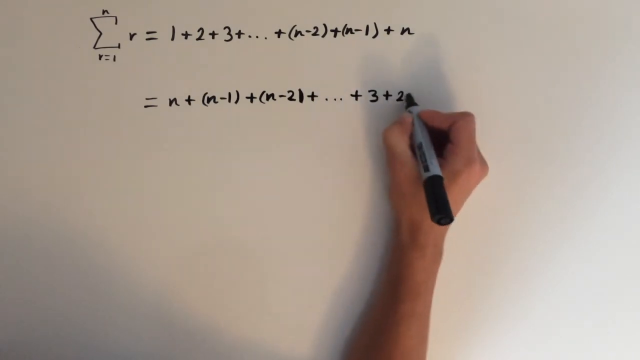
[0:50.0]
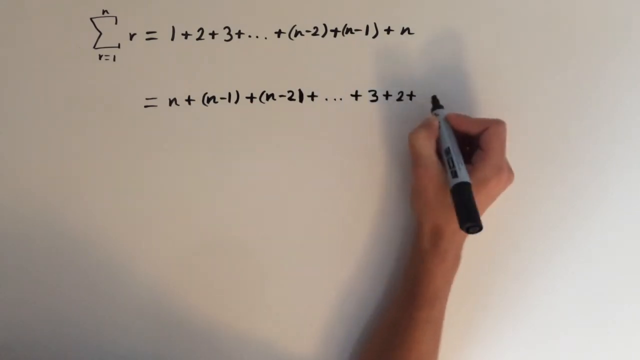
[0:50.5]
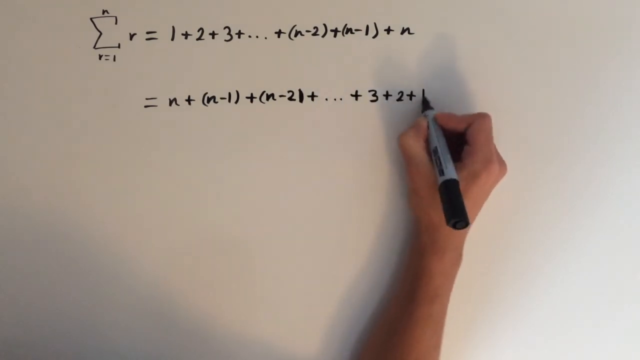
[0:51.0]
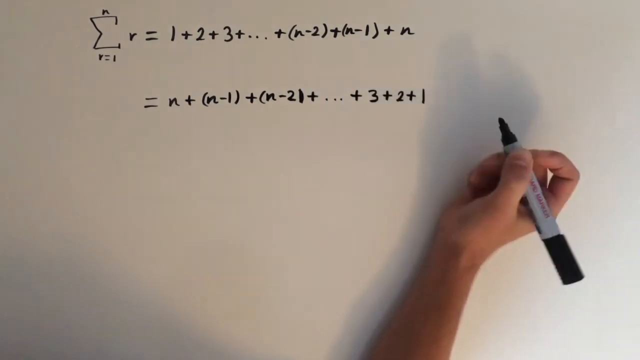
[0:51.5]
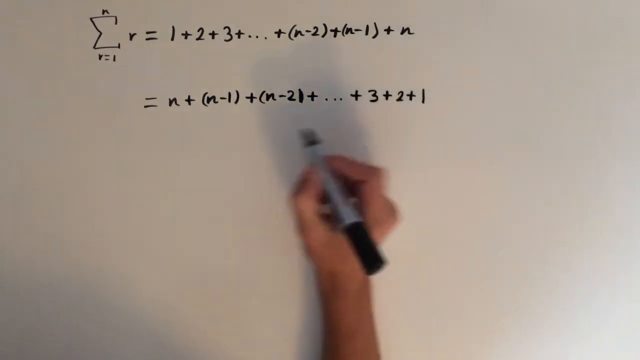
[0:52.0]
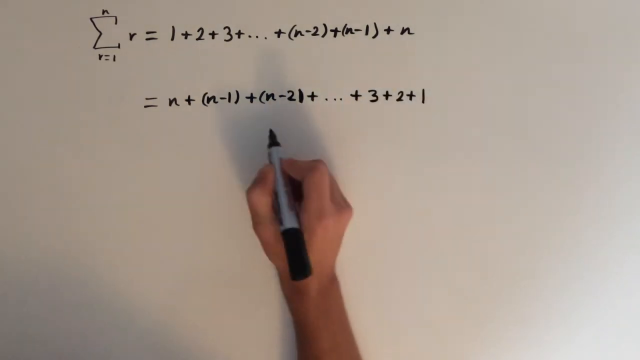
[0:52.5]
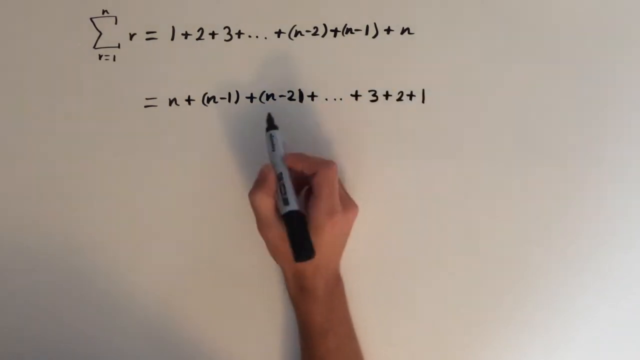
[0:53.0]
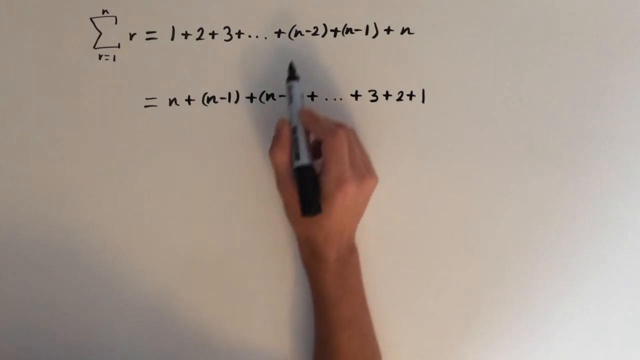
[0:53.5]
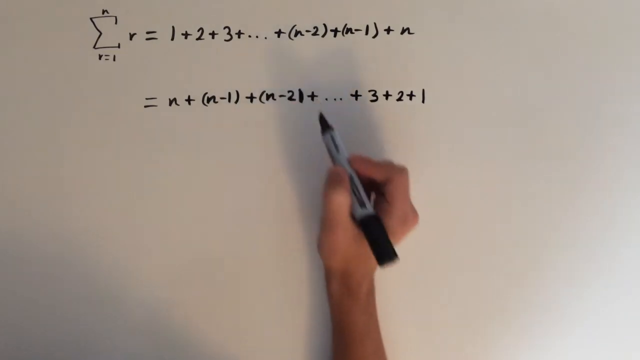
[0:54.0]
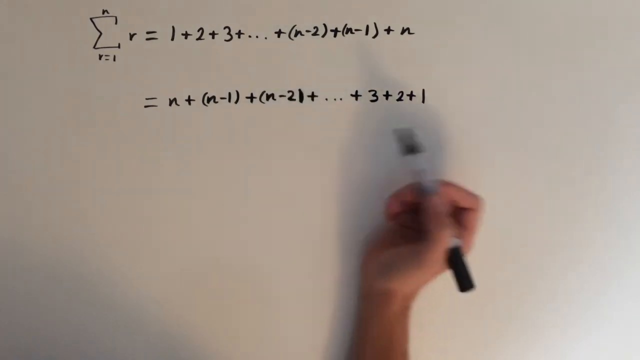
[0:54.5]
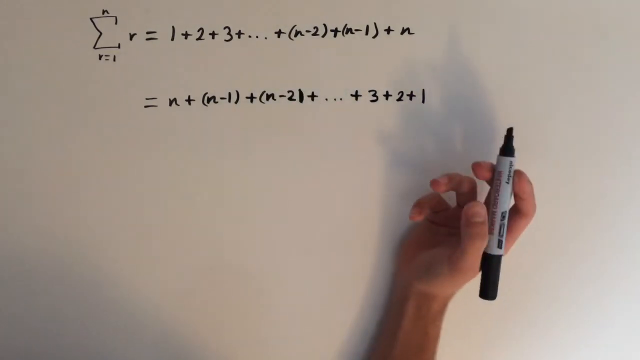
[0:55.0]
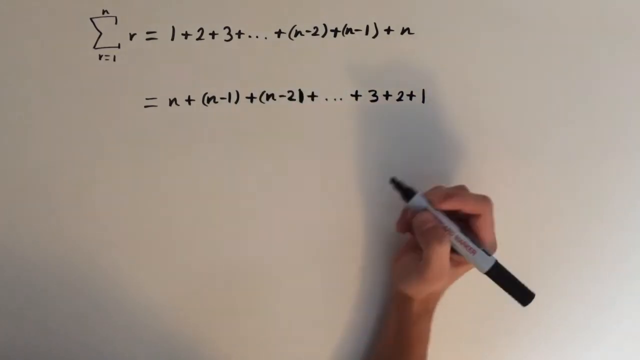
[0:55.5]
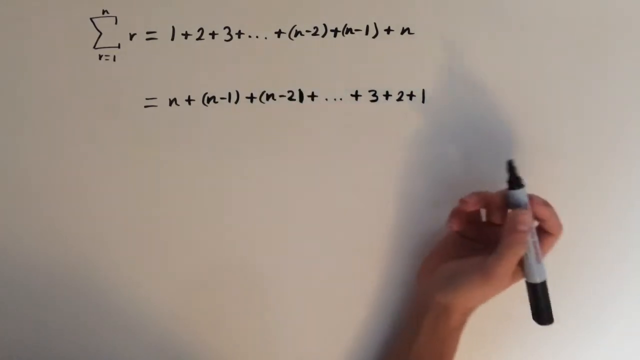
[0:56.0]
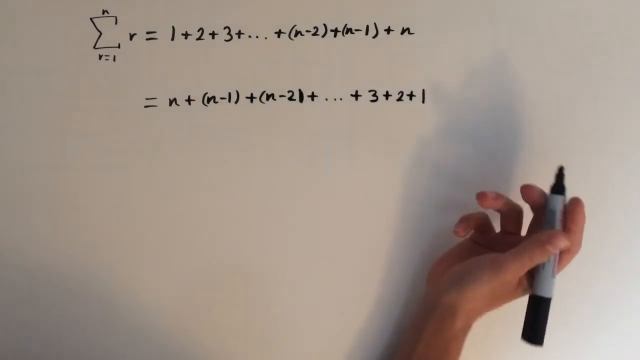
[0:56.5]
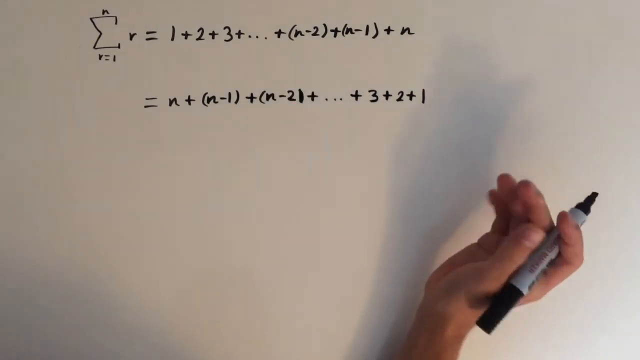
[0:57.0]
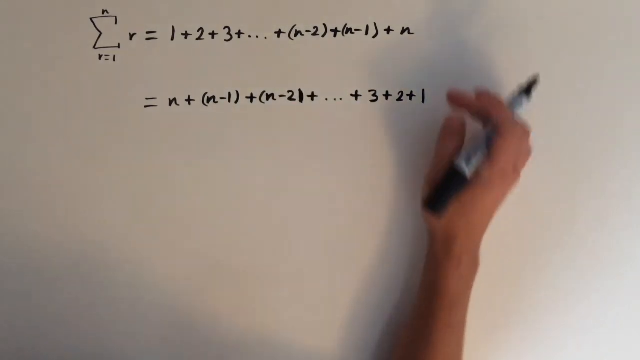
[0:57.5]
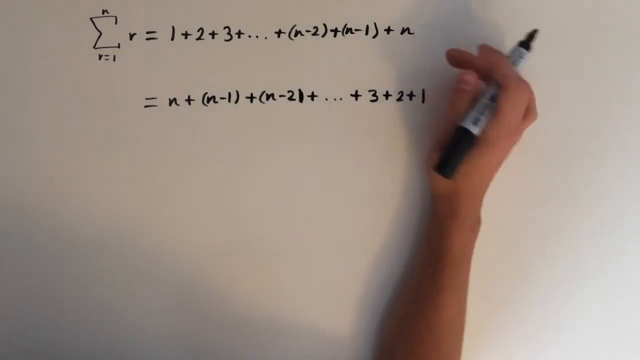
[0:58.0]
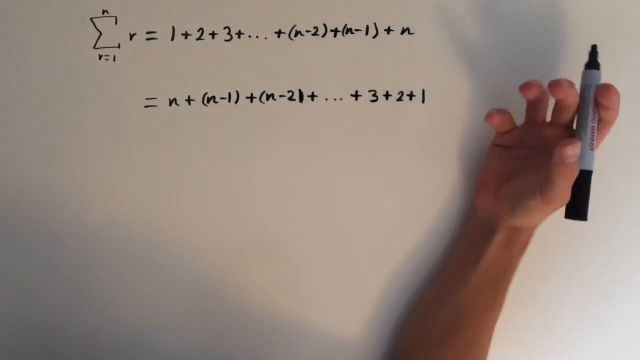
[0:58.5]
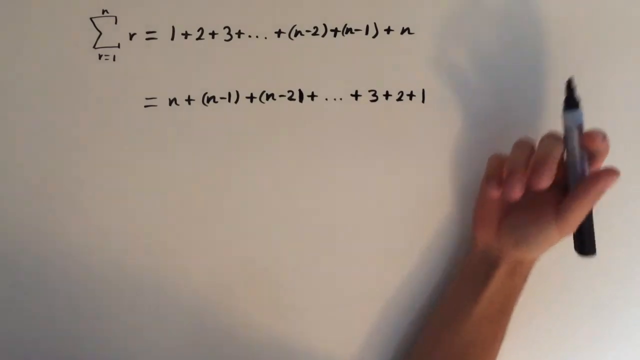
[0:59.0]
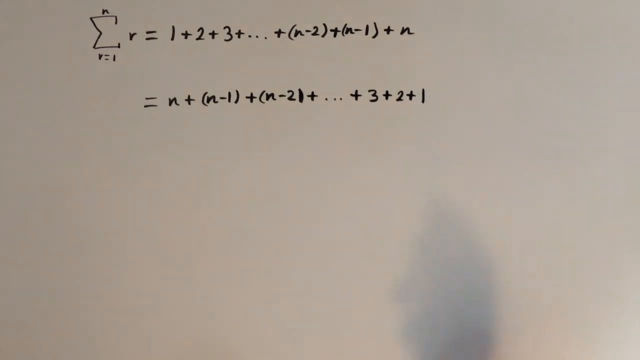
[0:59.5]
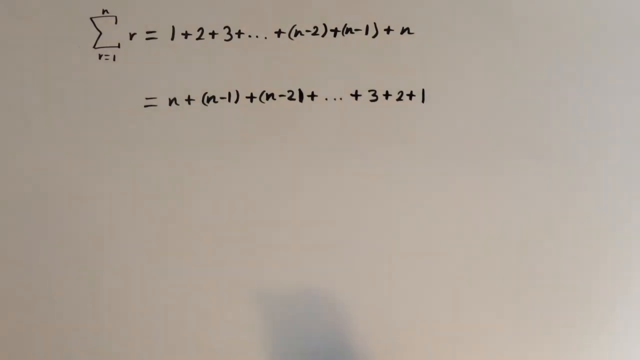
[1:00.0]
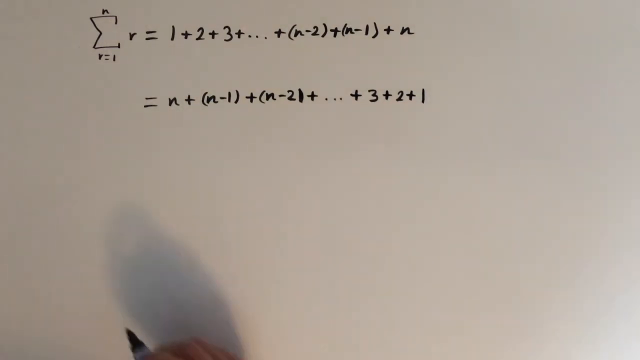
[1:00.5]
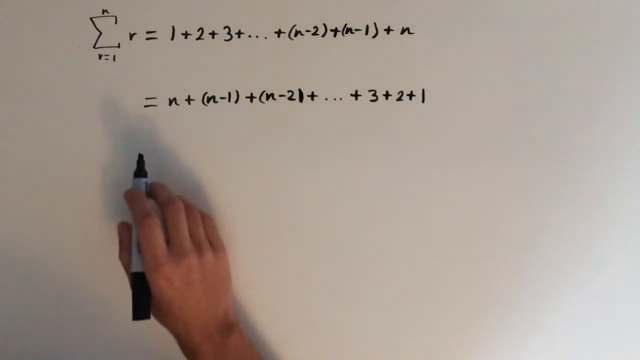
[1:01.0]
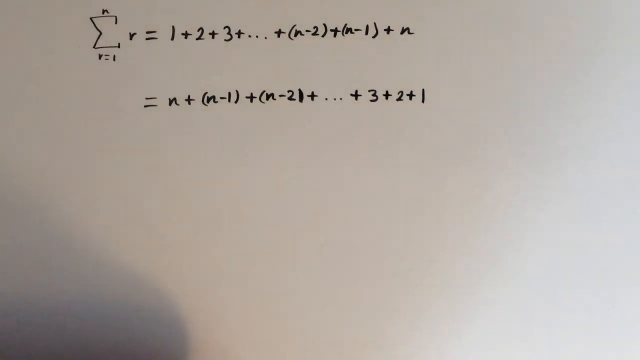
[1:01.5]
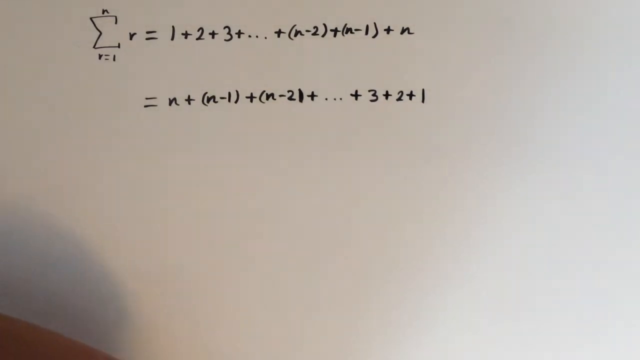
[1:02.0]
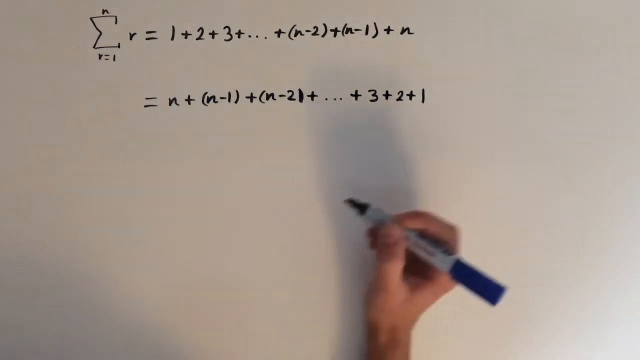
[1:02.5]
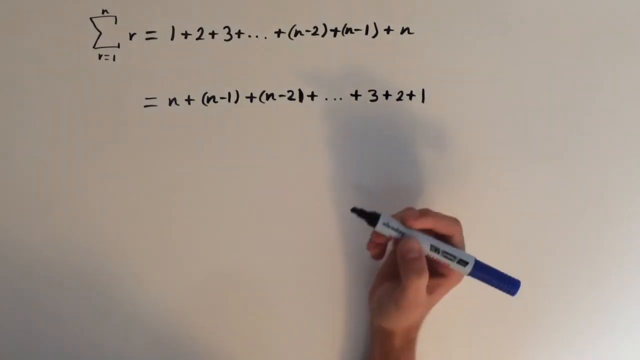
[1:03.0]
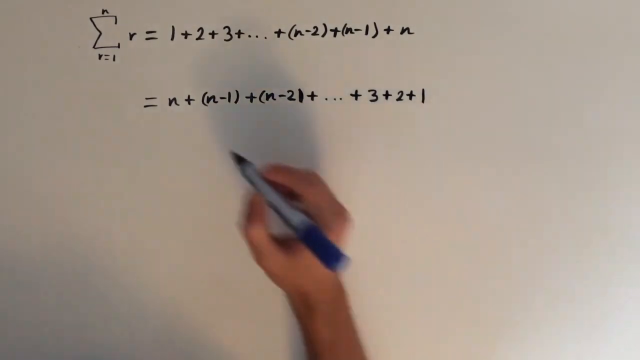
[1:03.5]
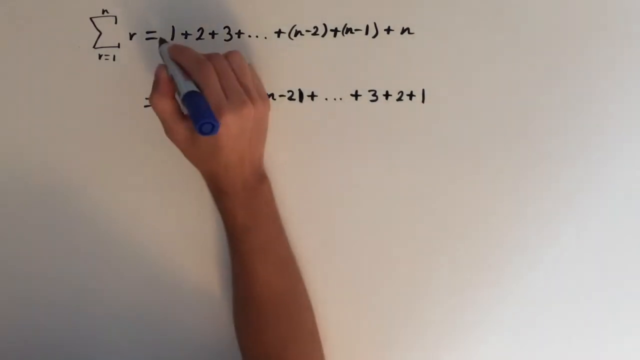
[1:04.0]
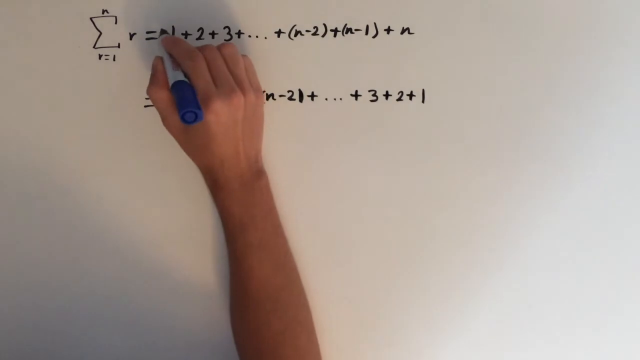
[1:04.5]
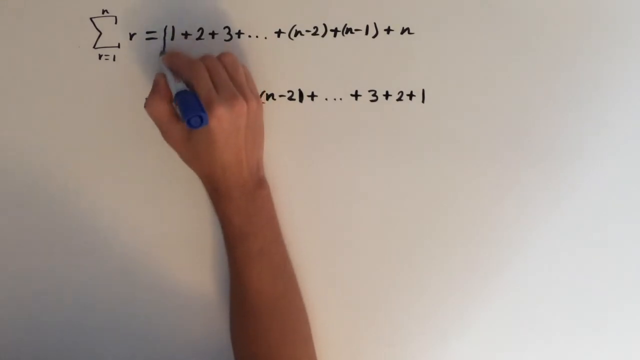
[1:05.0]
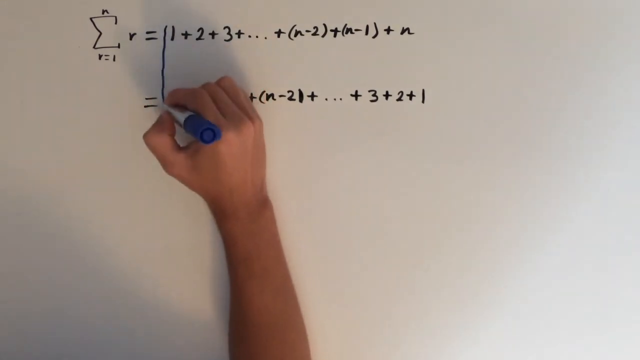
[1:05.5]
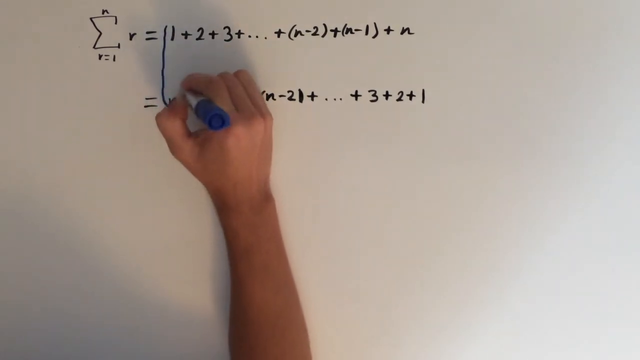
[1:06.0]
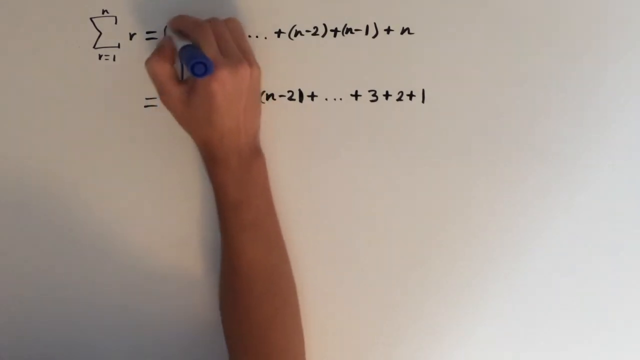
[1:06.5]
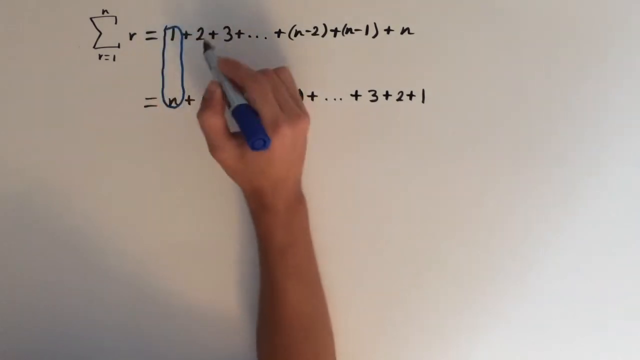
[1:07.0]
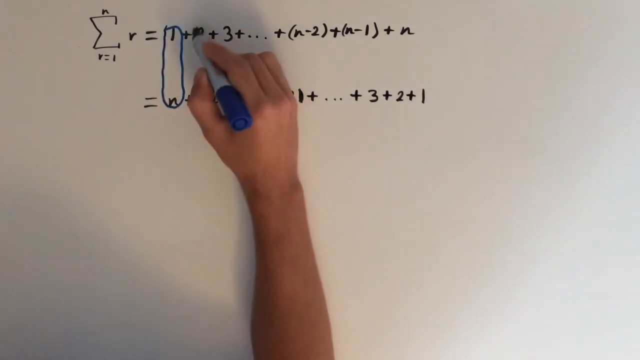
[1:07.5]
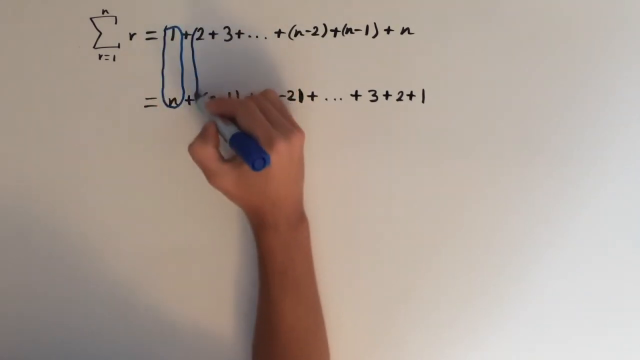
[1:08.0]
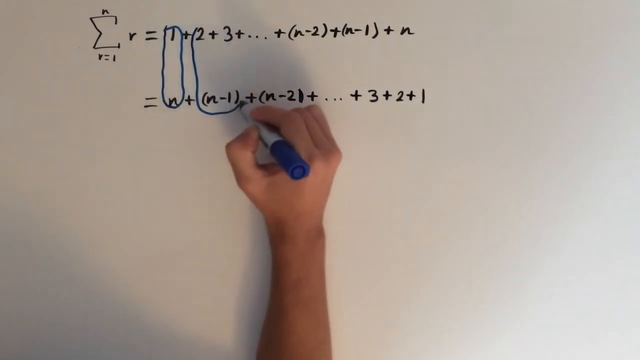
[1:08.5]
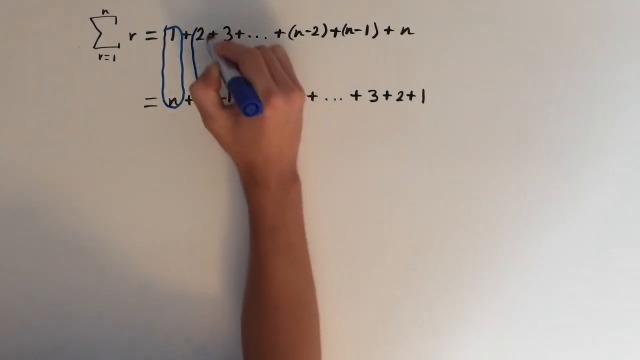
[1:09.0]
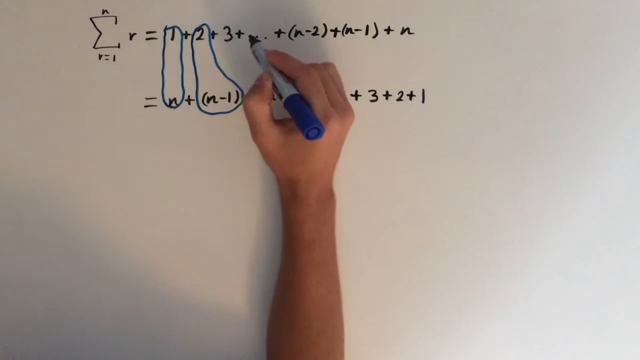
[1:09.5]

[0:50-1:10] The host has rewritten the equation backwards and points at different parts of it with his hand. He then uses a blue whiteboard marker, with a blue lid, a blue tip and a grey body, to draw bubbles around pairs of terms, apparently the 1 and the n, the 2 and the n − 1, and the 3 and the n − 2. The blue apparently marks these groupings so they stand out and are easier to understand. His arm is very white and pale, of normal build, neither fat nor skinny.